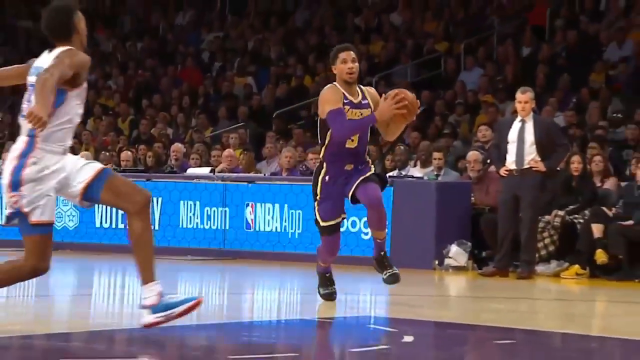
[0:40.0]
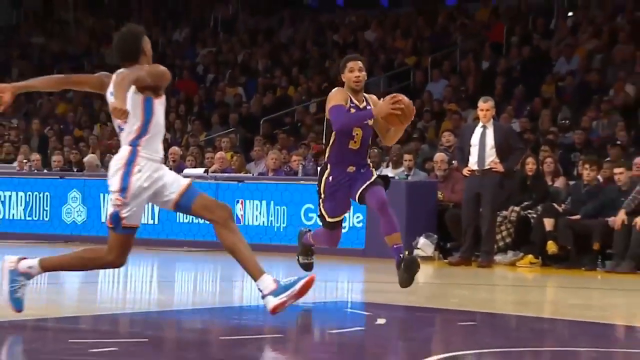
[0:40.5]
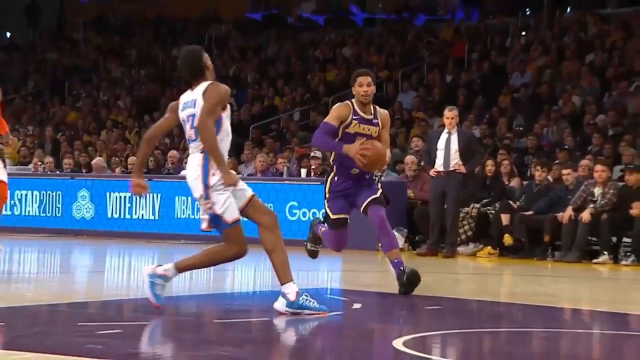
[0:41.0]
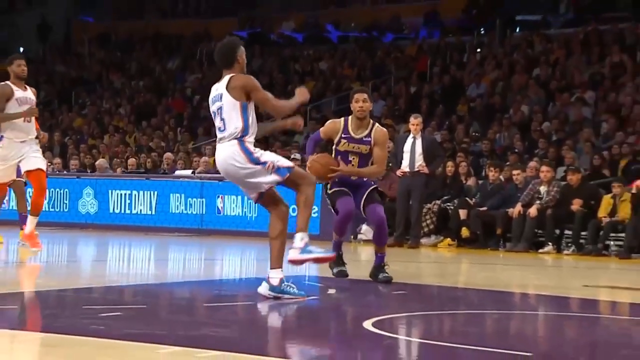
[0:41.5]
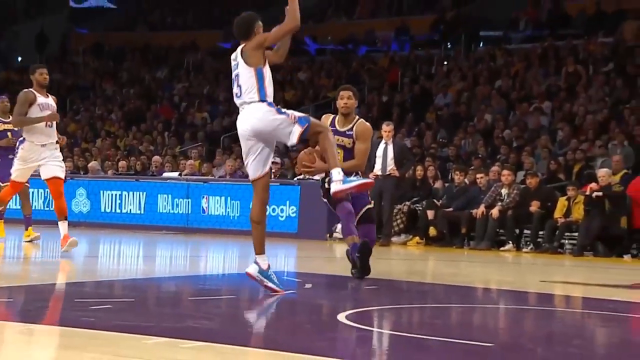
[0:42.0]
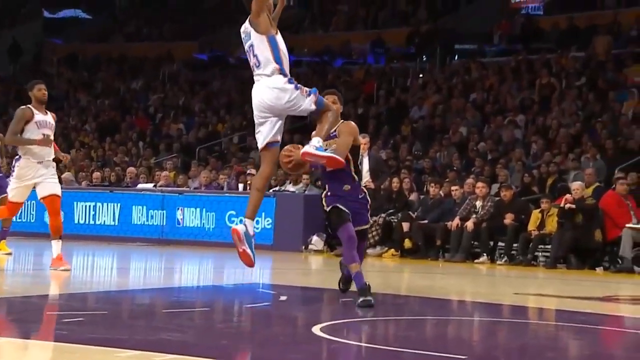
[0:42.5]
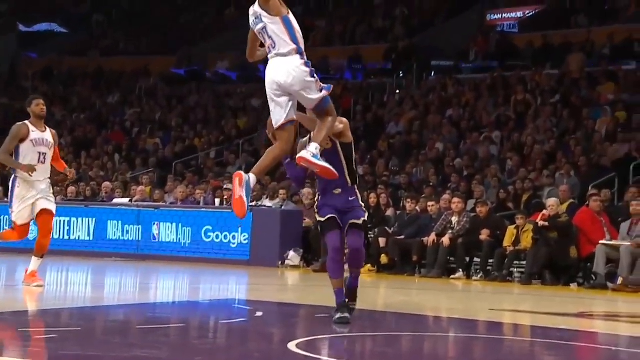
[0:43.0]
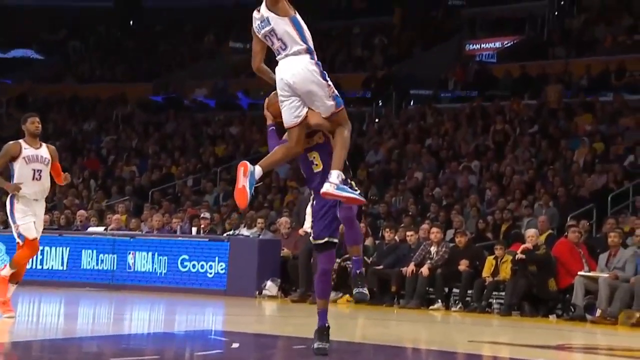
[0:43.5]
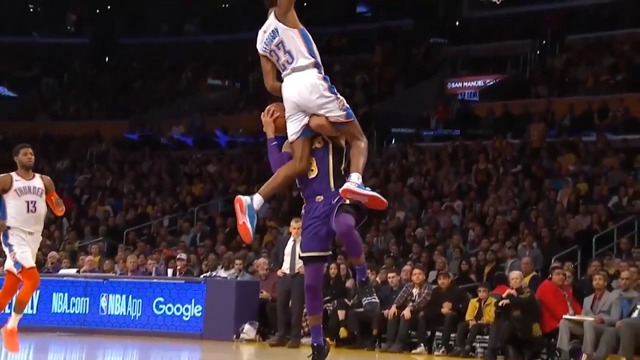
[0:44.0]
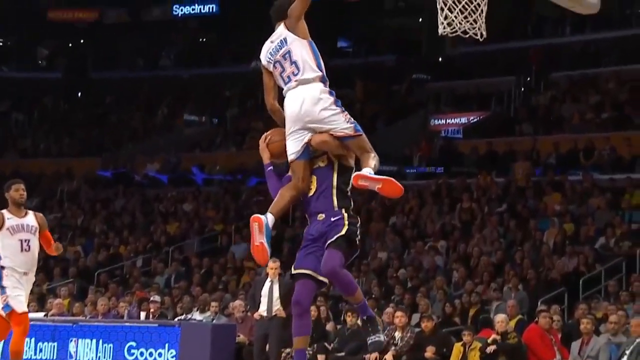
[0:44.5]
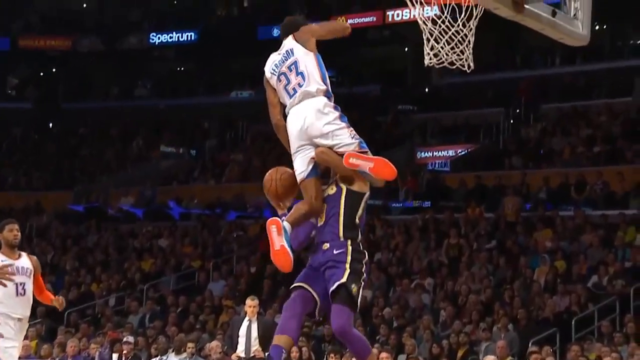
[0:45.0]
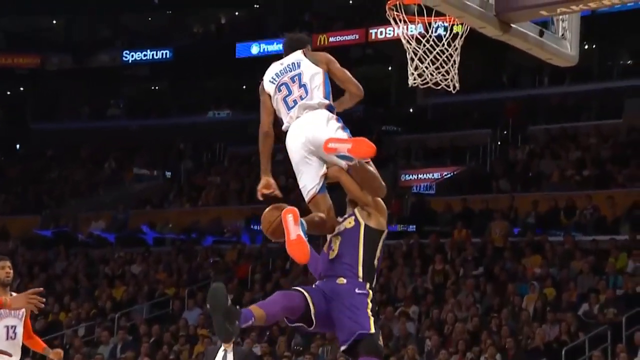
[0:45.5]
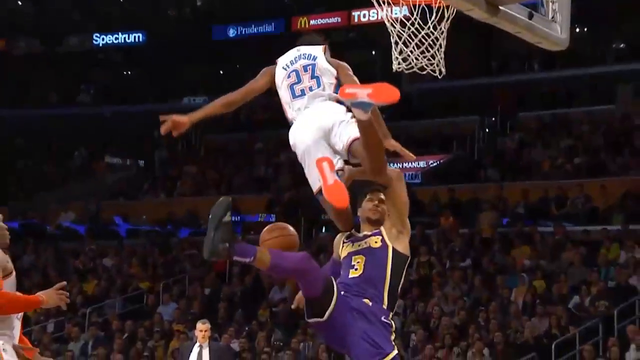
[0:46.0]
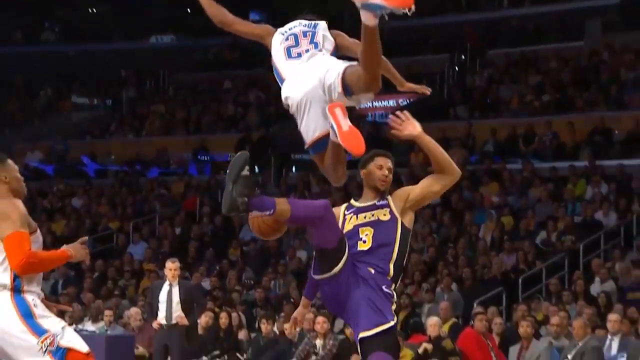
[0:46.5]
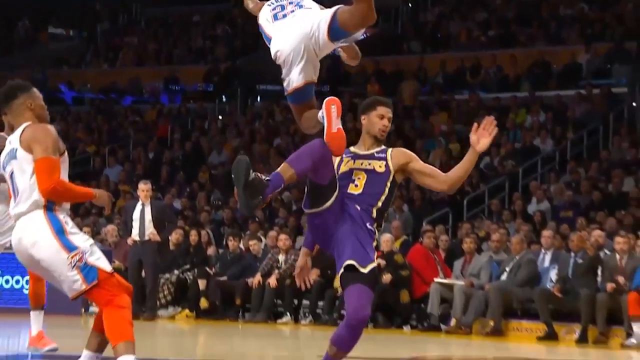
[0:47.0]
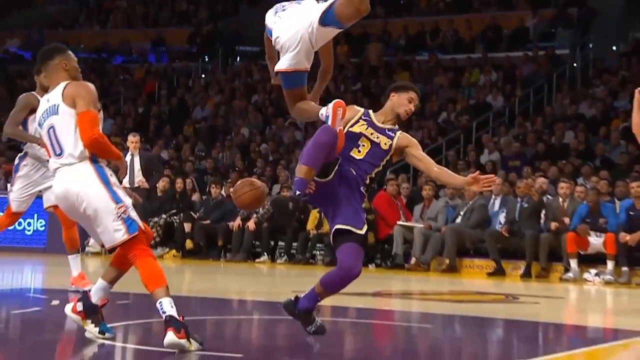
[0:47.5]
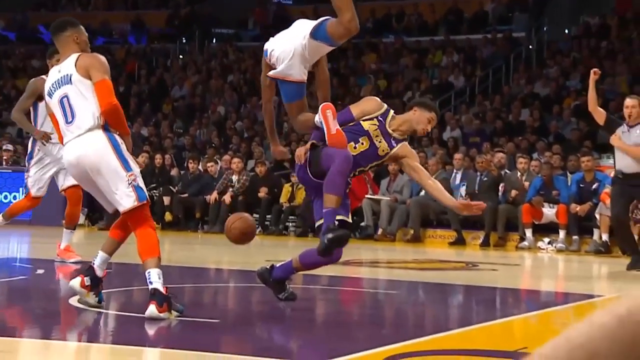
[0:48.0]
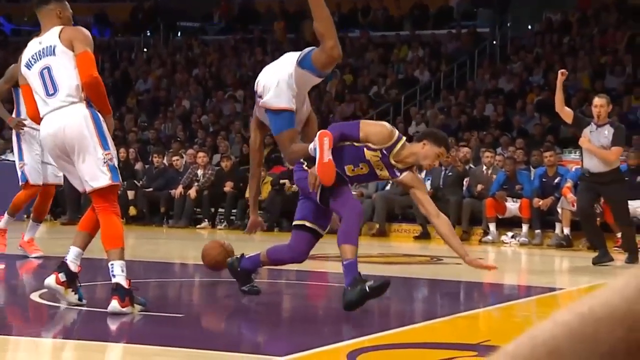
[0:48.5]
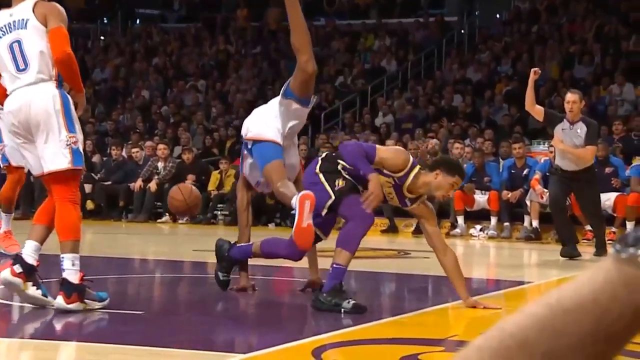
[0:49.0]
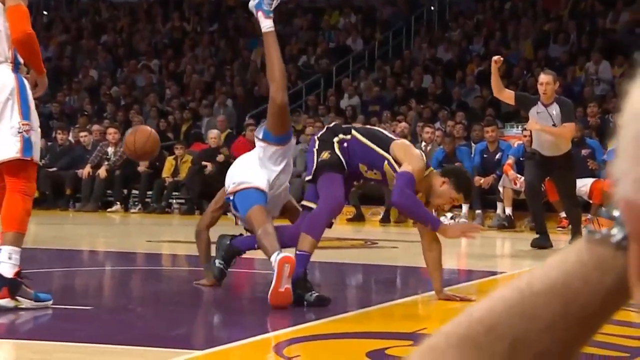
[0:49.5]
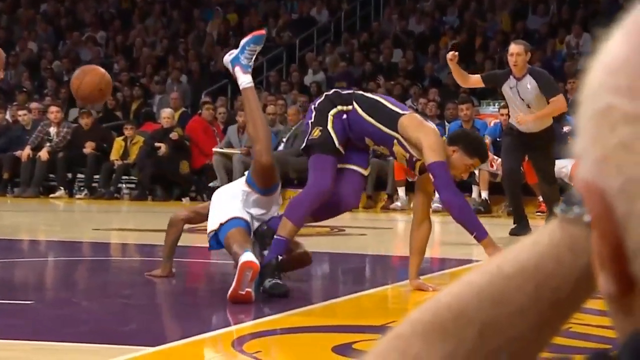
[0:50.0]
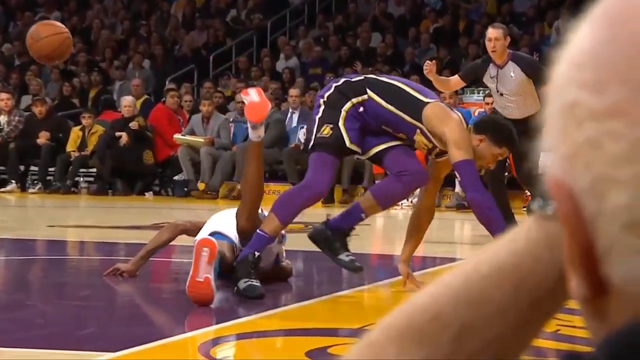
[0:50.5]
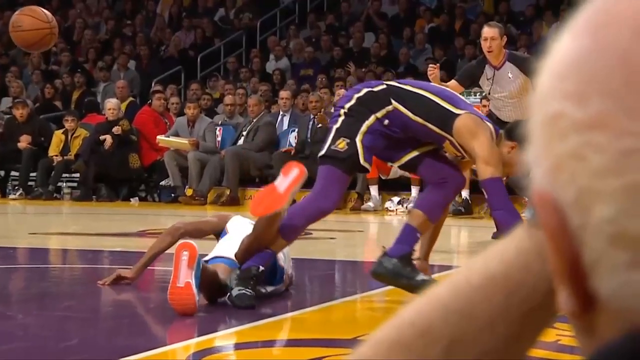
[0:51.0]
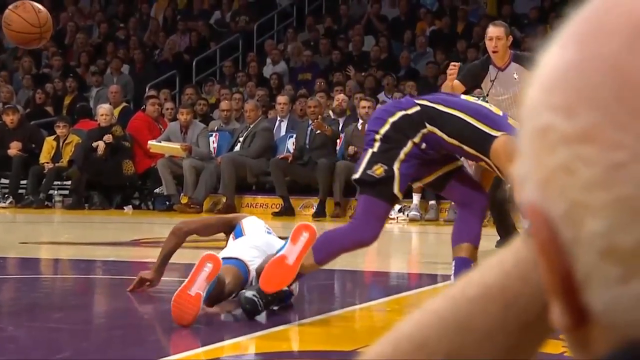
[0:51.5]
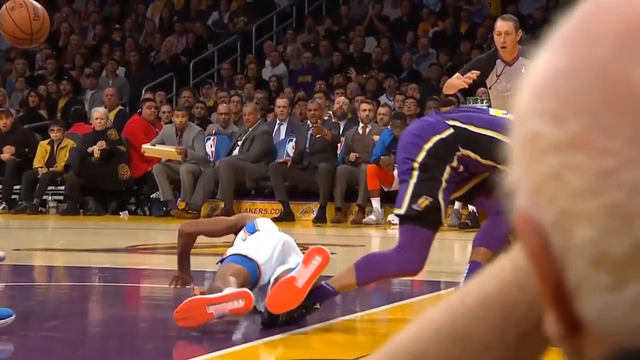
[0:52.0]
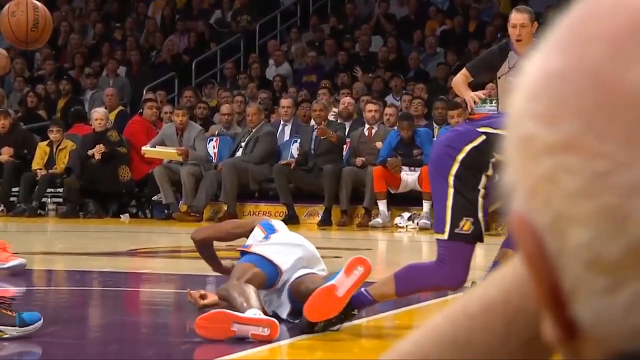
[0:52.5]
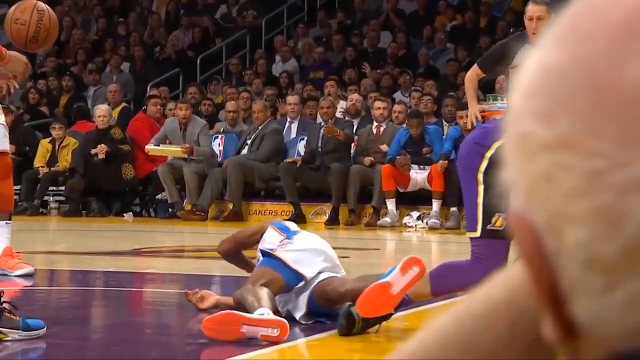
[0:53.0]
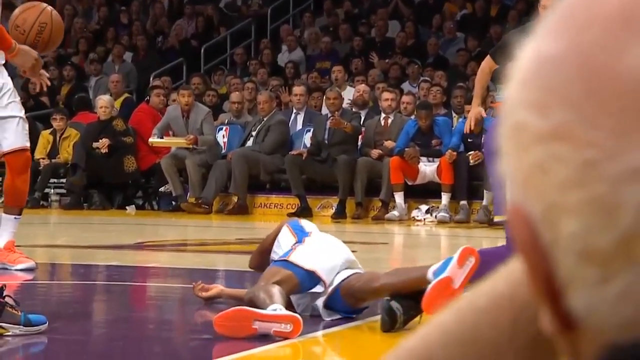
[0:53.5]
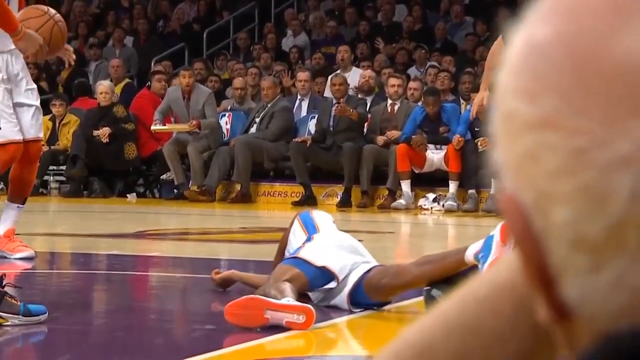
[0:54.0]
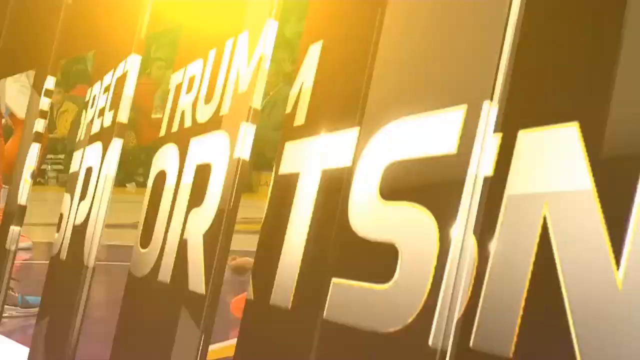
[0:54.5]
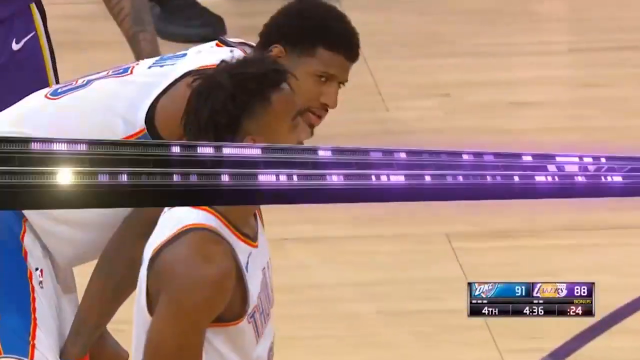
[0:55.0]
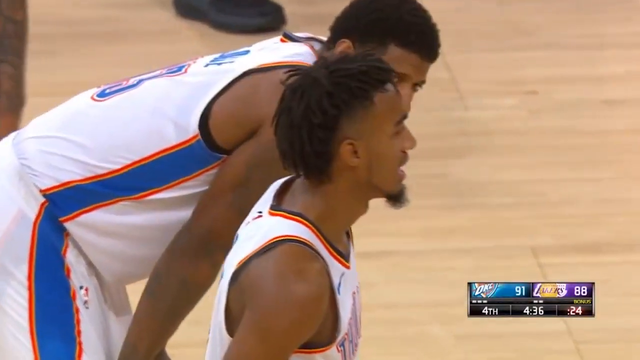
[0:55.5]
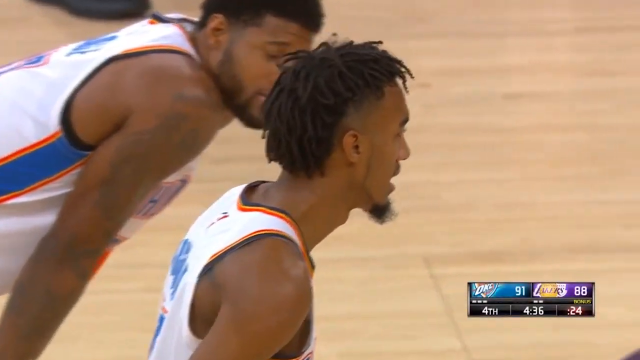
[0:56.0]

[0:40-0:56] Before a collision, the press box where the score is kept is visible, showing "NBA.com" and then "NBA app" in white letters on a blue background. Lakers player number three comes straight toward the camera while an Oklahoma City player runs to try to stop him. Number three goes up into the air, and so does Oklahoma's number 23, who goes so high that his midsection is level with the Lakers number three's head. They collide midair, and the Oklahoma City player comes down on his right side, specifically his right shoulder and elbow, and stays on the ground until the video suddenly ends.